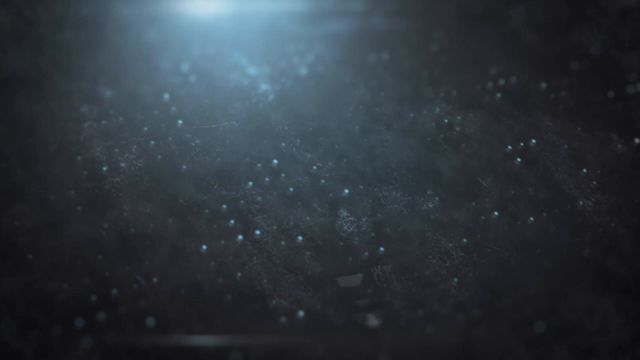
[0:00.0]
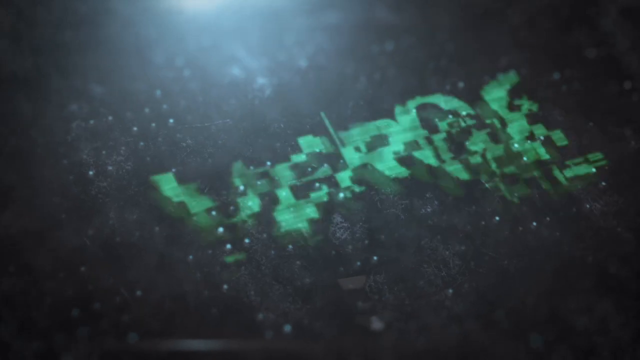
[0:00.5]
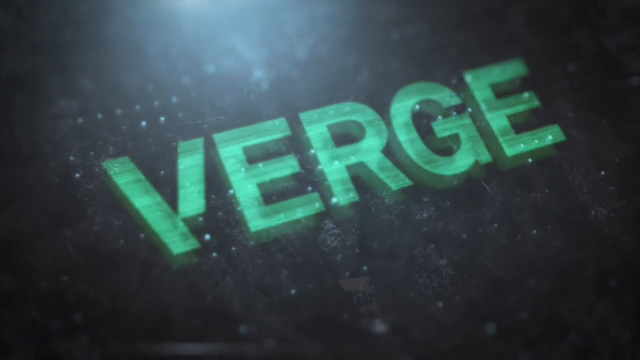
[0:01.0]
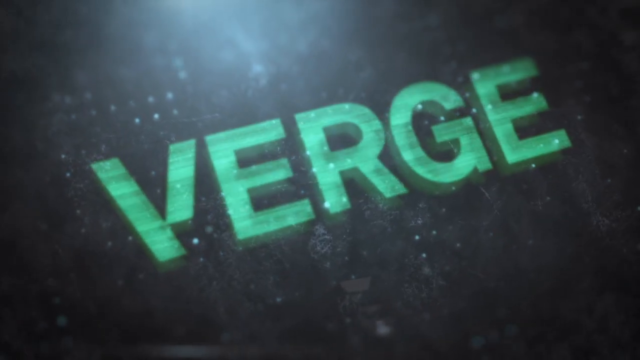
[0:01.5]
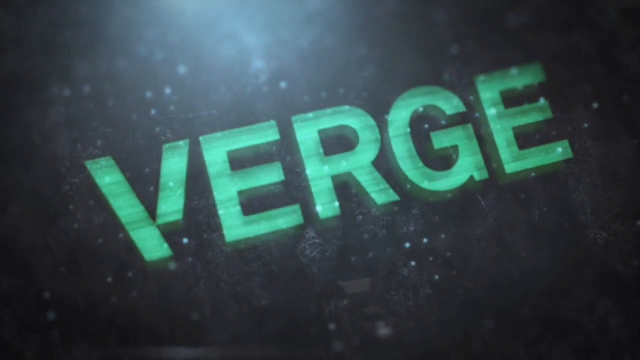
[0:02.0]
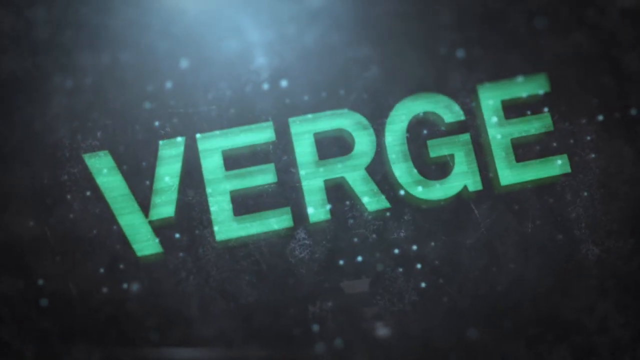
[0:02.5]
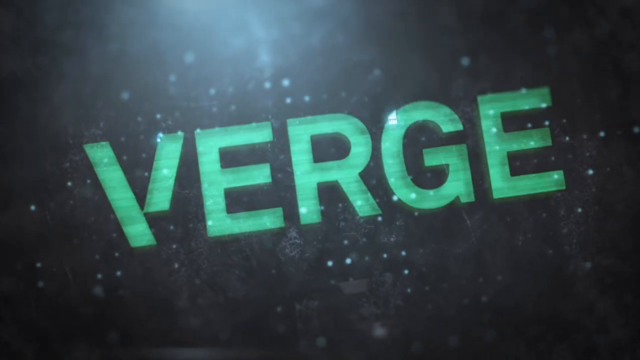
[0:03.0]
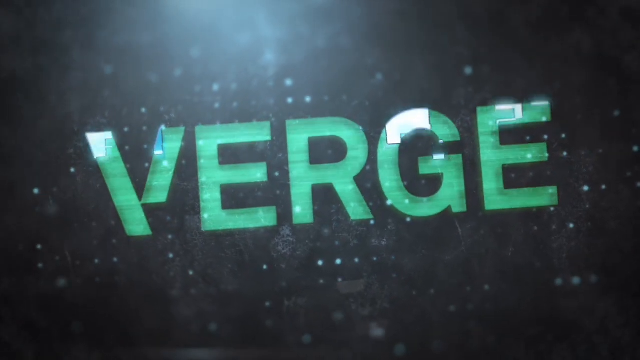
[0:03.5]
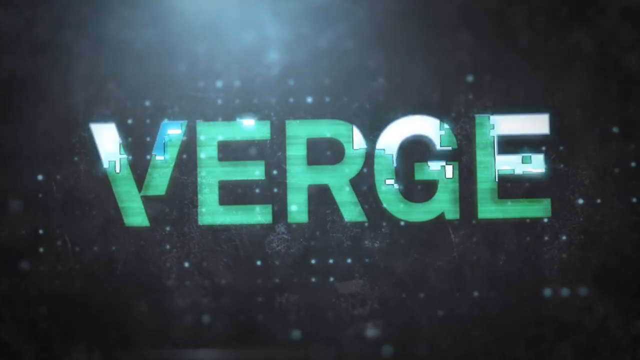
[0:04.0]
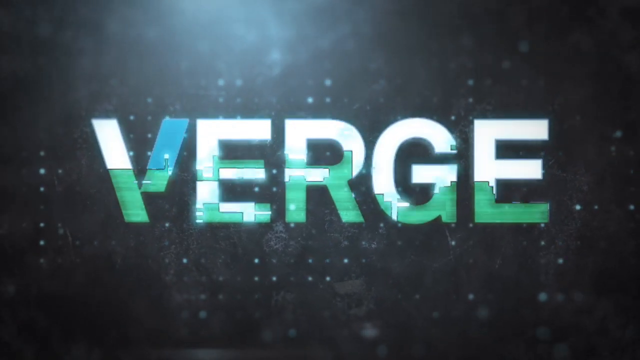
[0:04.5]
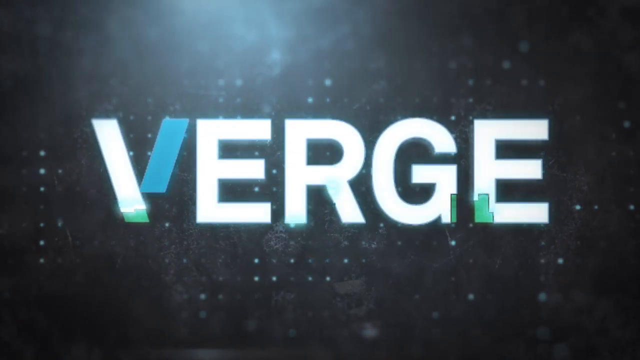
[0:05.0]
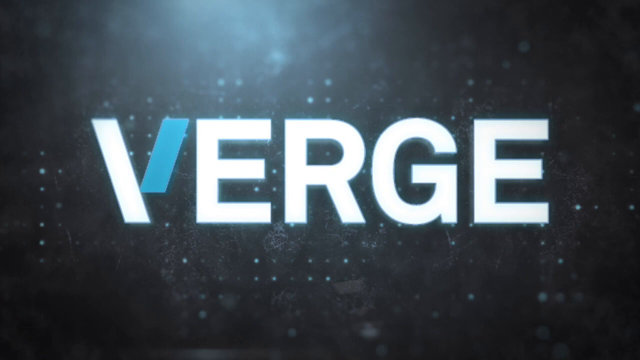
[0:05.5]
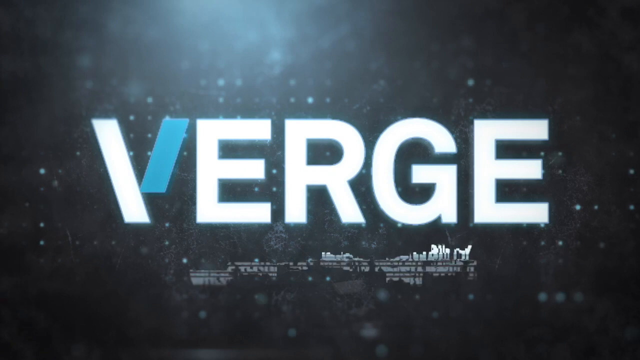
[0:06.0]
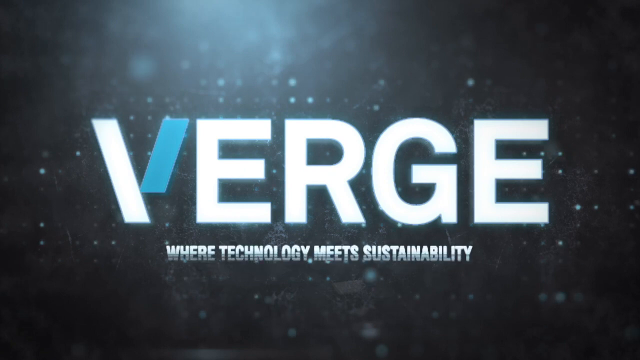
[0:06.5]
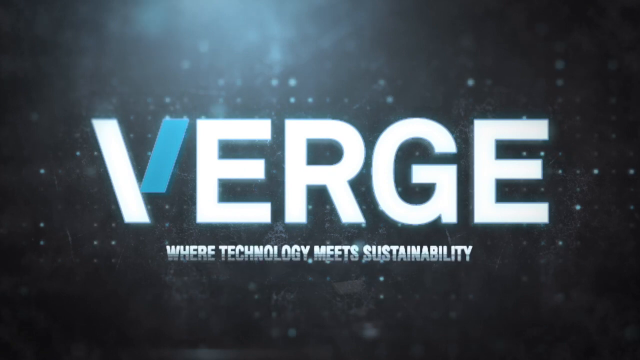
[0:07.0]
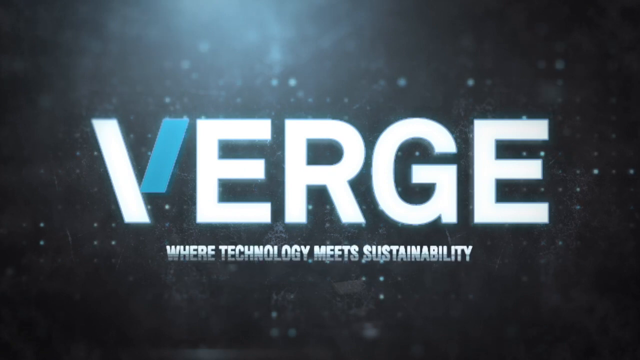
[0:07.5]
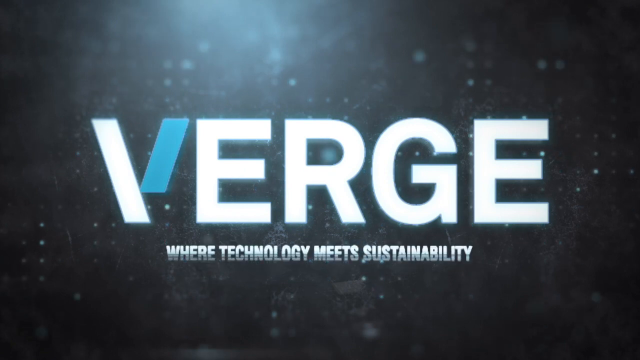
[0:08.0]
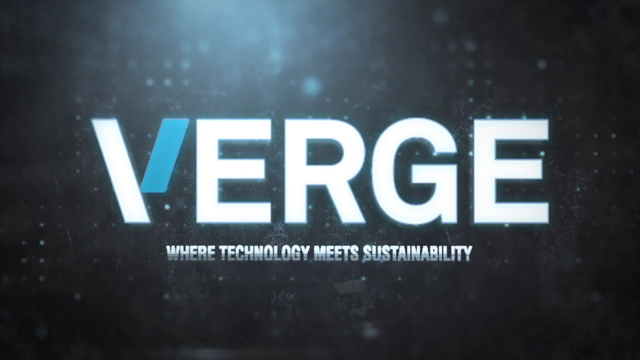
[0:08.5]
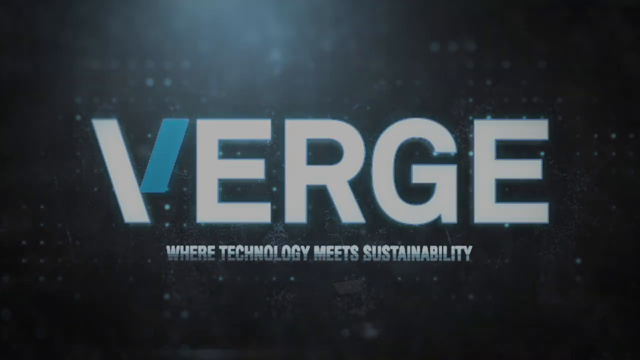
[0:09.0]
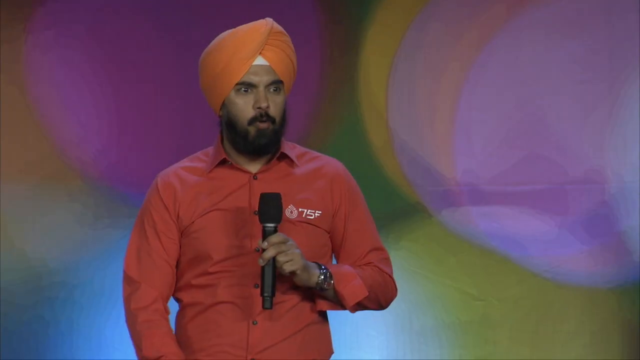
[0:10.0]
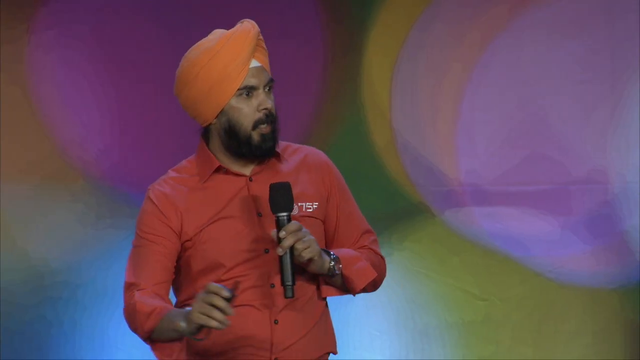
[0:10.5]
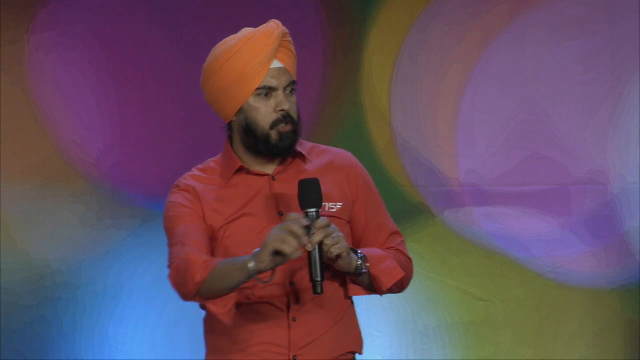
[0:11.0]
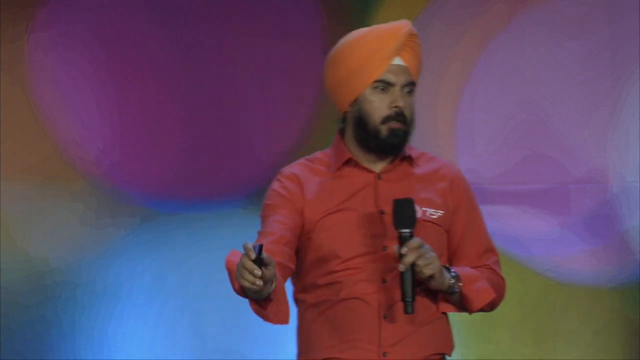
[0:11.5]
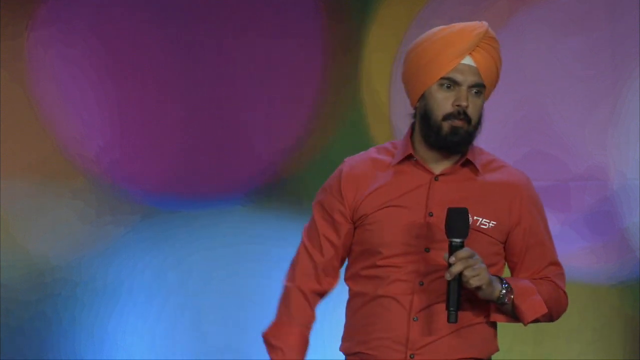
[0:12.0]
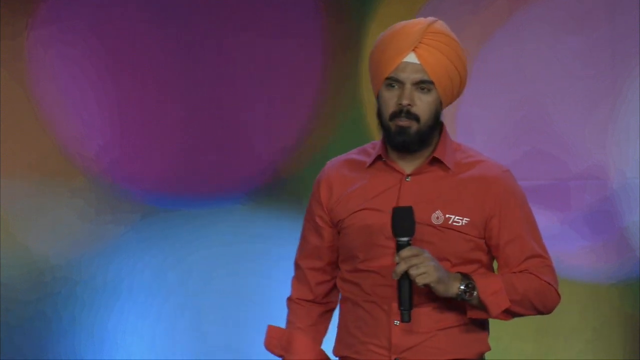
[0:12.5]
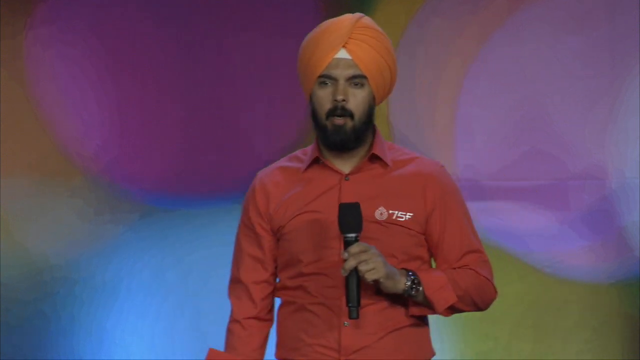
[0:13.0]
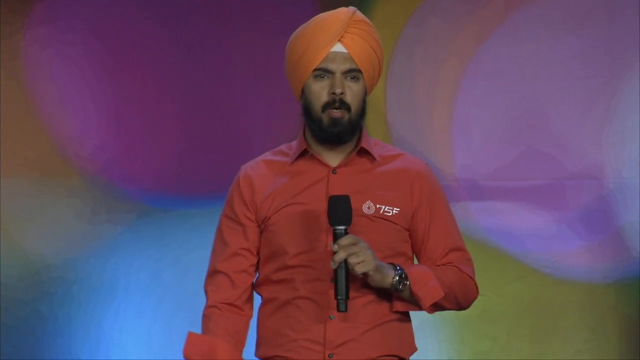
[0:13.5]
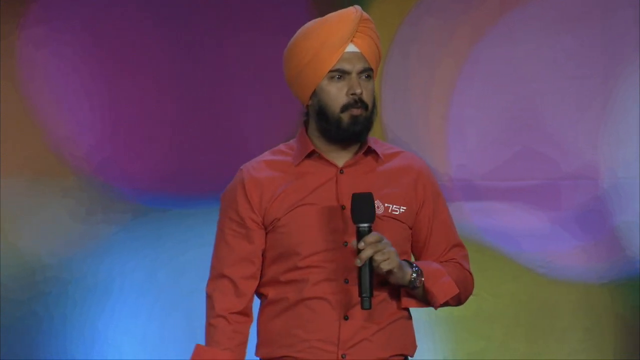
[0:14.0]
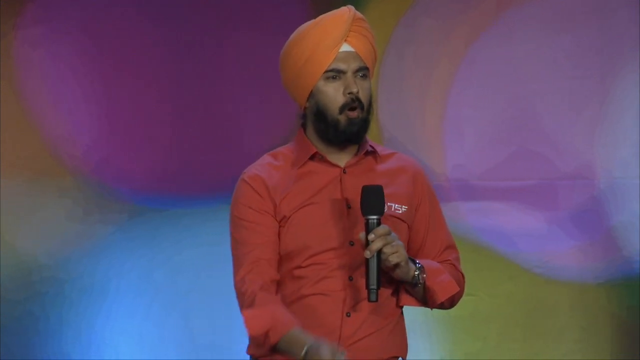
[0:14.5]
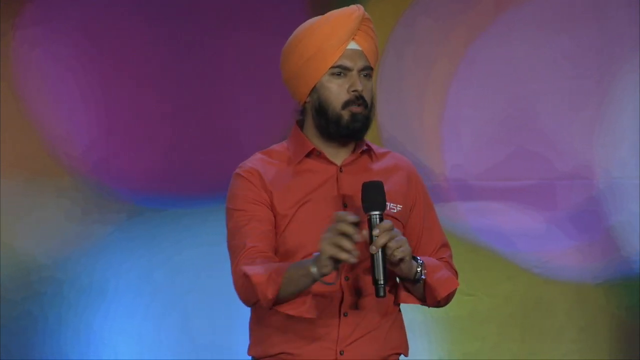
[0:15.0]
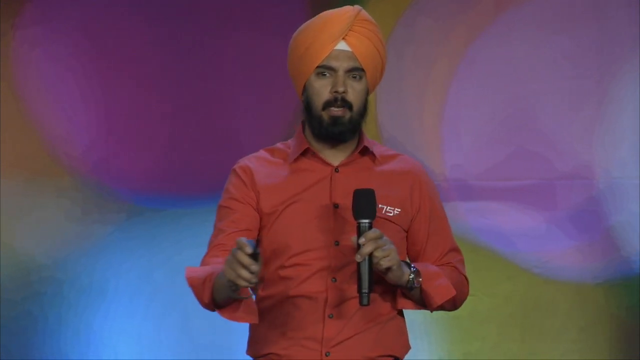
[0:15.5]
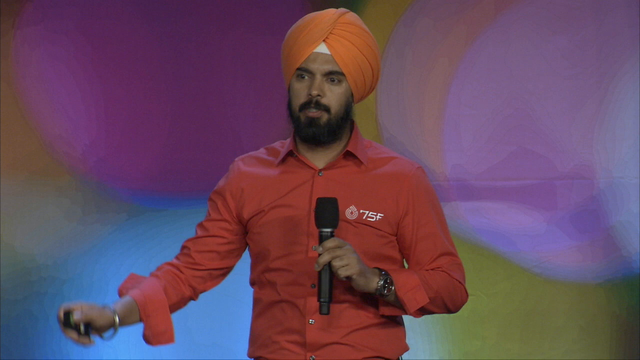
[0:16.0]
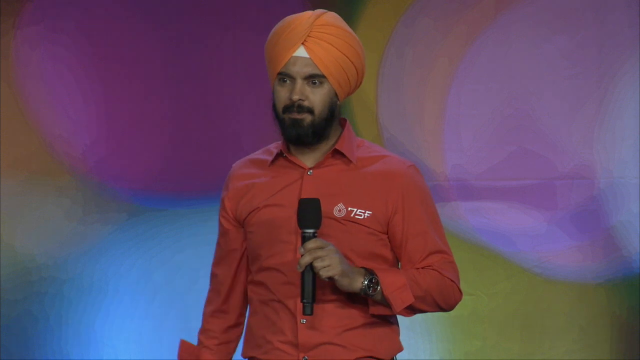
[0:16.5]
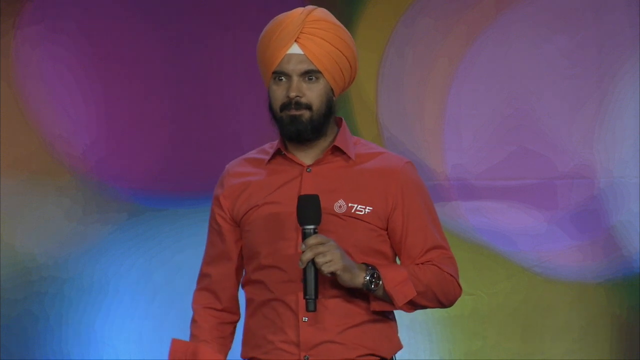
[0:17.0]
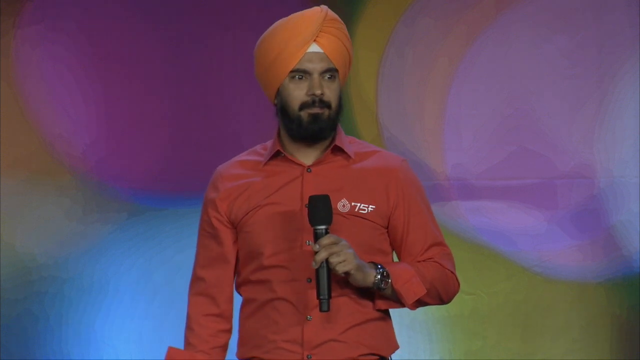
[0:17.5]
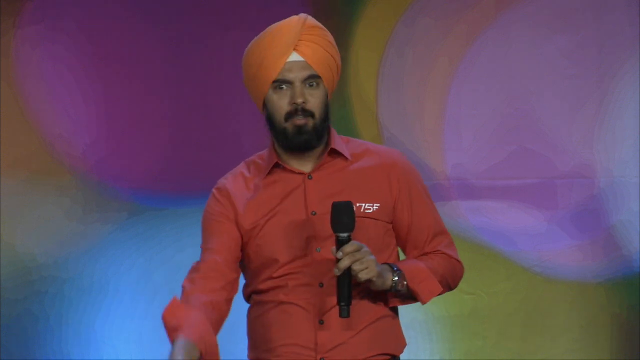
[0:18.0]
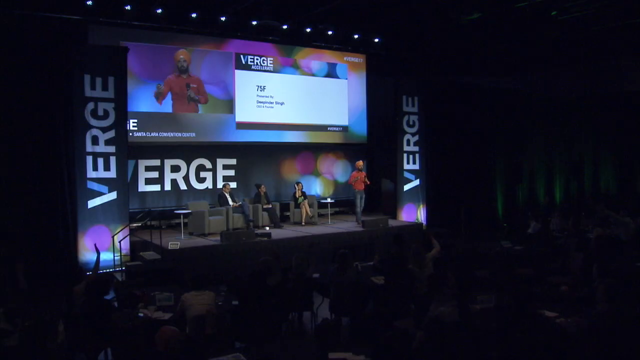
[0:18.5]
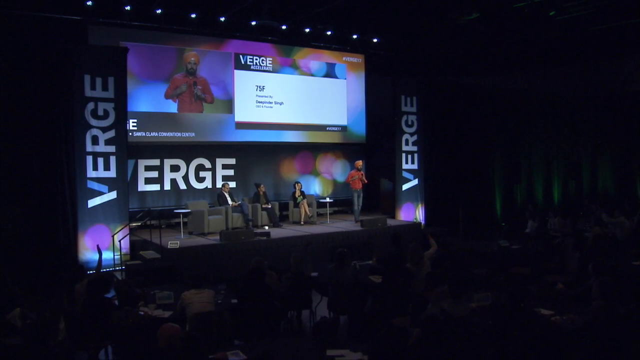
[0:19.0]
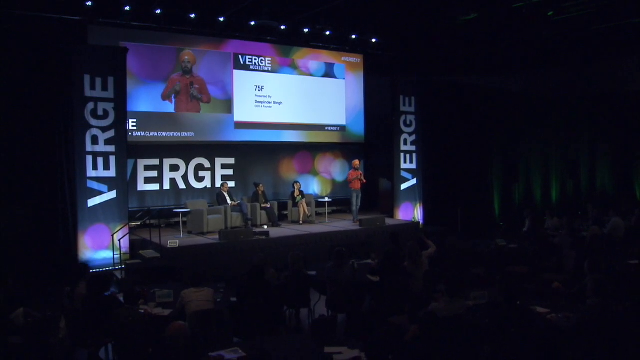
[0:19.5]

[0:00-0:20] The video opens on a grey background with dust speckled around the image. Green writing shimmers onto the screen reading "VIRG" in capital letters. The writing spins as the camera pans around it, and it transforms from green to white with a blue note on the V as the subtitle "Where Technology Meets Sustainability" appears. A background of greens, purples and yellows appears, as if refracted in a prism. A speaker talks into a microphone: a South Asian man with a beard, a red shirt, a watch on his left wrist and an orange turban. As he speaks, he gestures with his right arm, moving it left to right while looking at the audience. The camera switches to a wider view showing the man standing on a stage with three other people sitting on grey-brown sofas. His image is projected above him on a large screen alongside a slide deck.